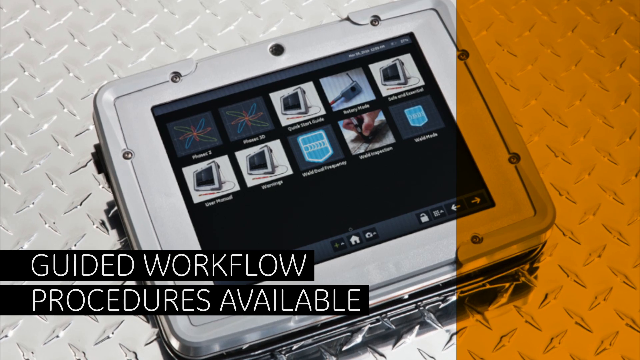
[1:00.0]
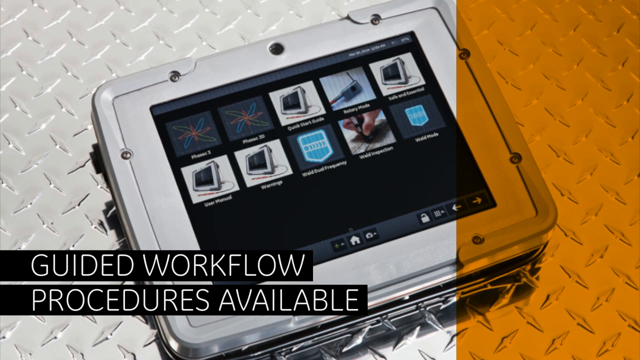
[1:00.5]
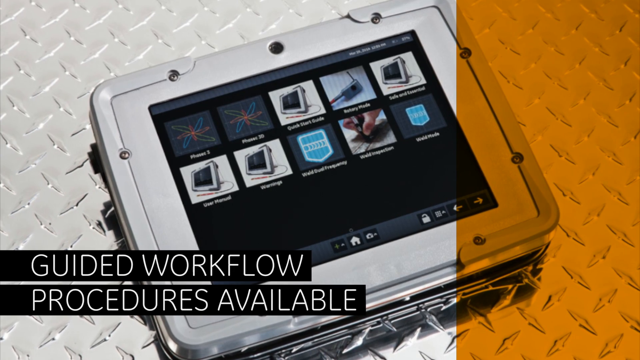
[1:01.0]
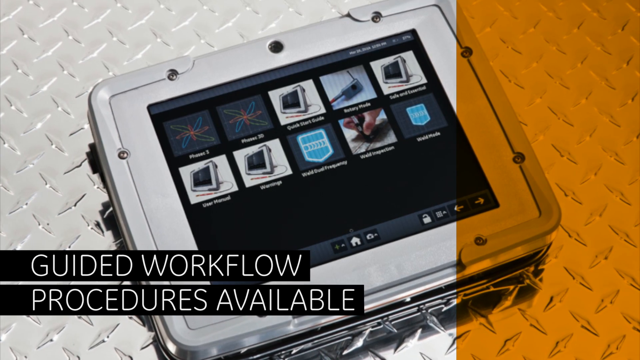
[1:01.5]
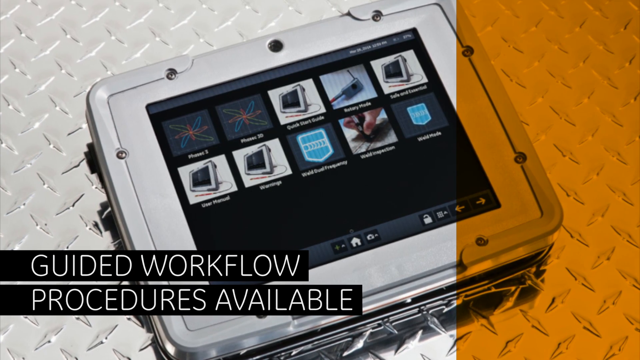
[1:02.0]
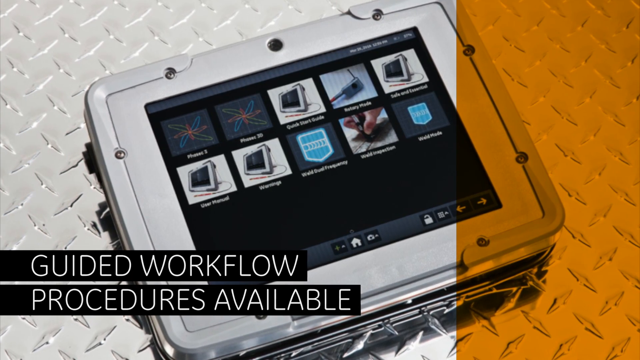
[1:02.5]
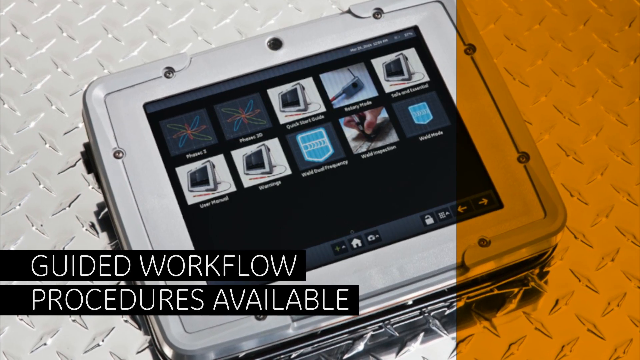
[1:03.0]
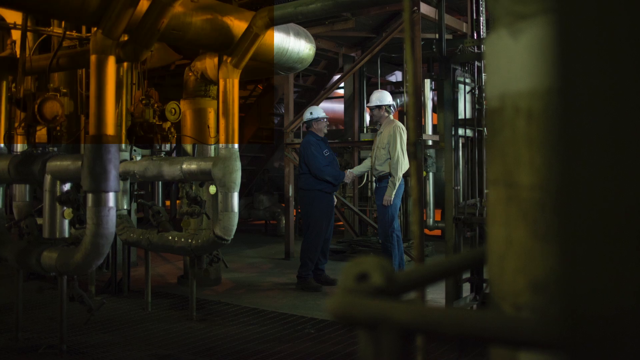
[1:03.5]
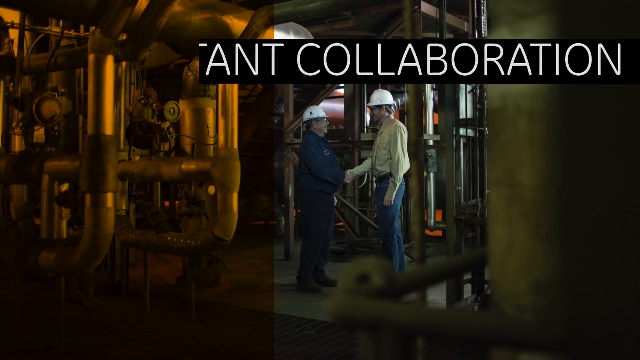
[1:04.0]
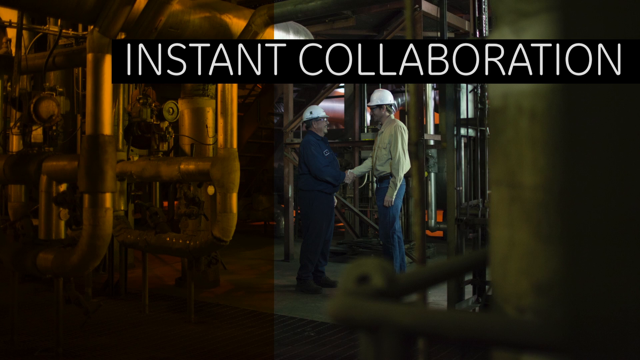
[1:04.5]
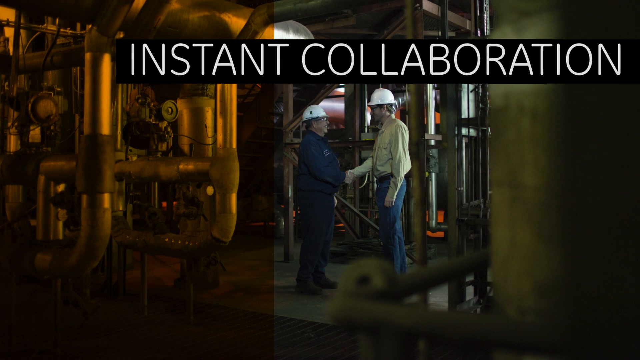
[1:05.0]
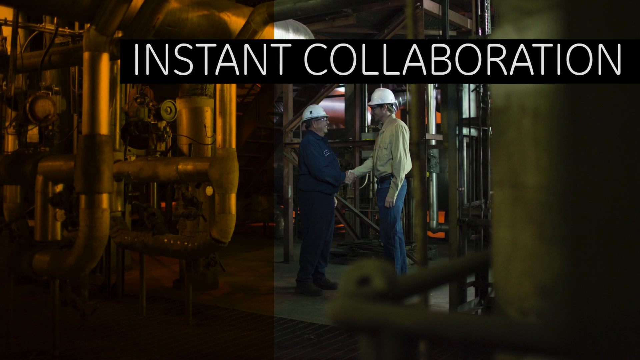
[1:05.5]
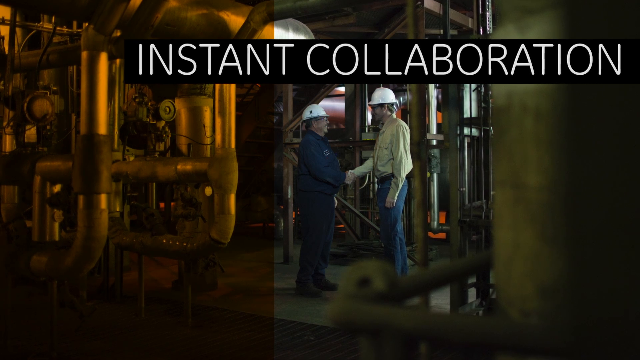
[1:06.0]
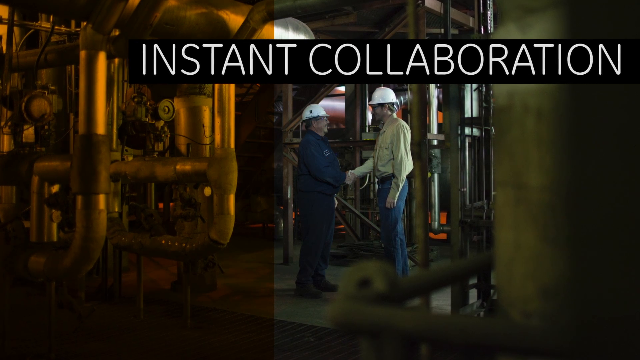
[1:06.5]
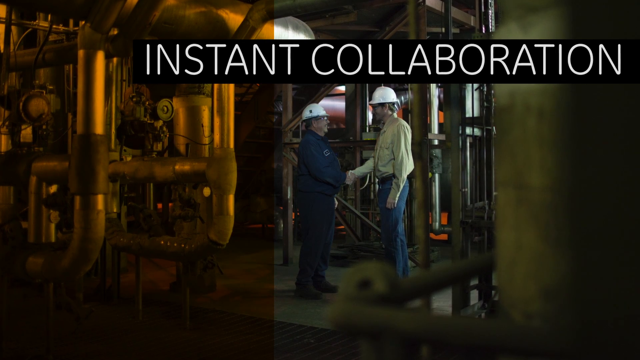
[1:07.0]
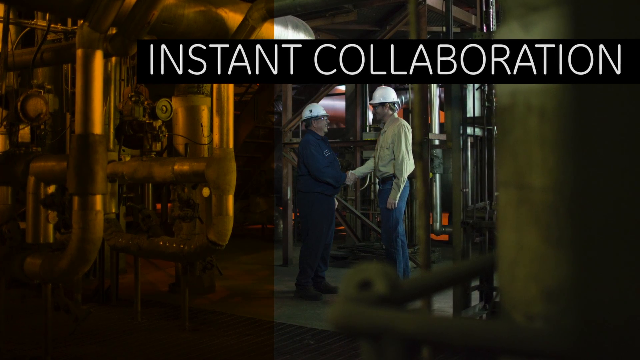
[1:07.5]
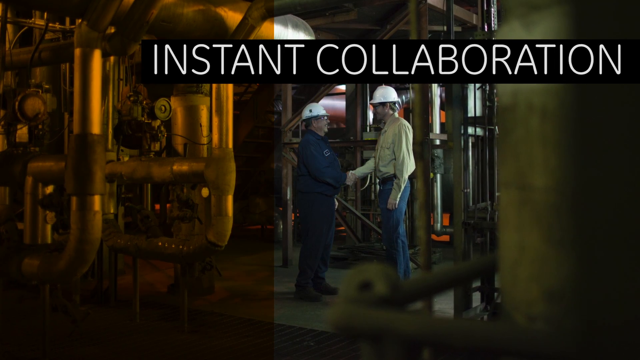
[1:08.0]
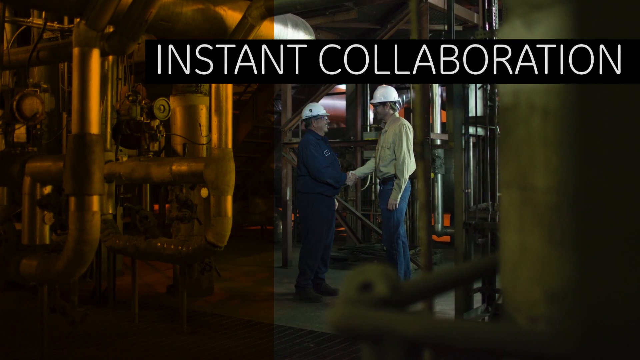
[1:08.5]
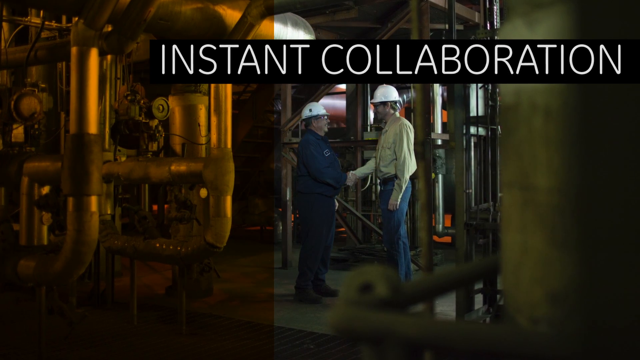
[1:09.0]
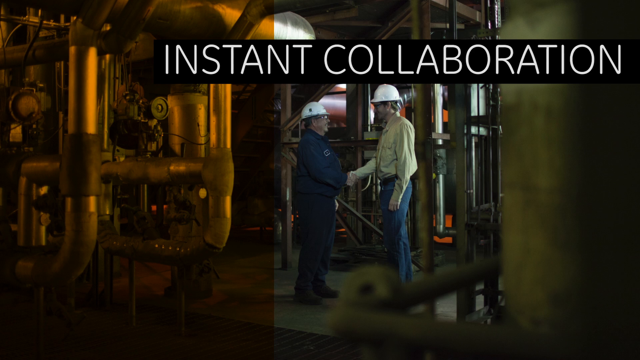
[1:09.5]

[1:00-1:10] The video covers the guided workflow procedures available. It begins with an overview of the weld detection device showing 10 features. The device lies on a metal box, and its screen is silver with orange. The next screen shows two workmen, apparently an employee and a supervisor, shaking hands in a warehouse environment. The title "instant collaboration" appears, possibly the first step of the guided workflow procedures.